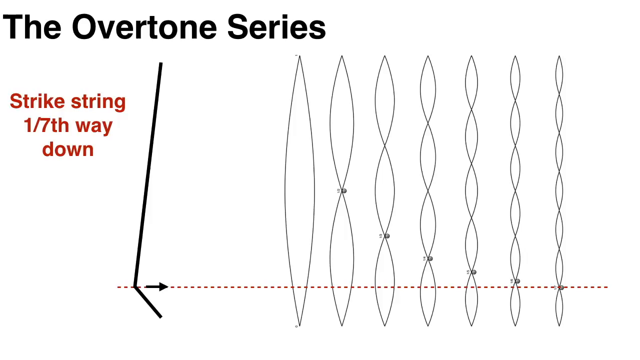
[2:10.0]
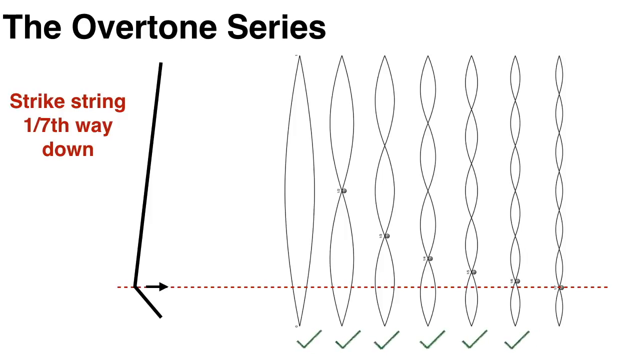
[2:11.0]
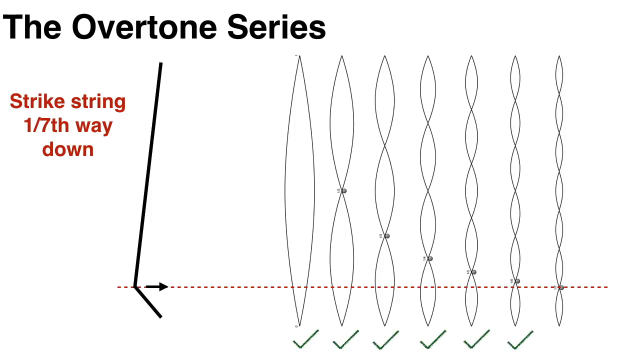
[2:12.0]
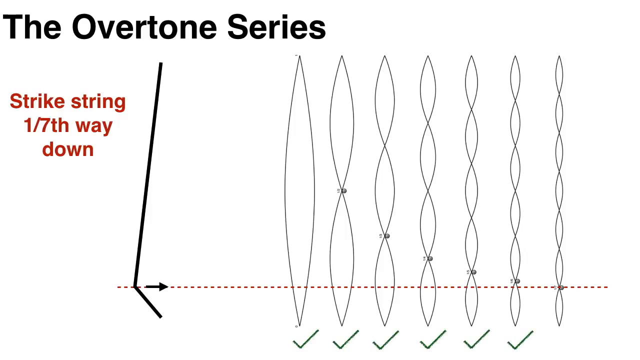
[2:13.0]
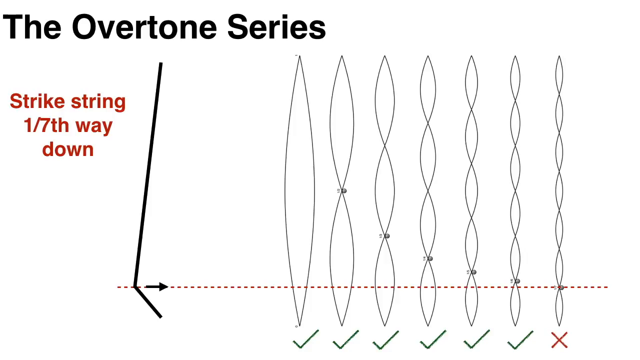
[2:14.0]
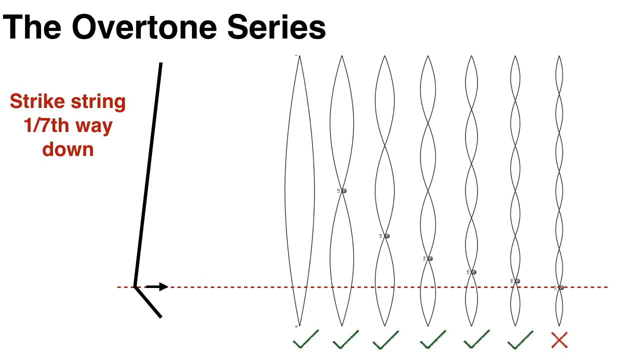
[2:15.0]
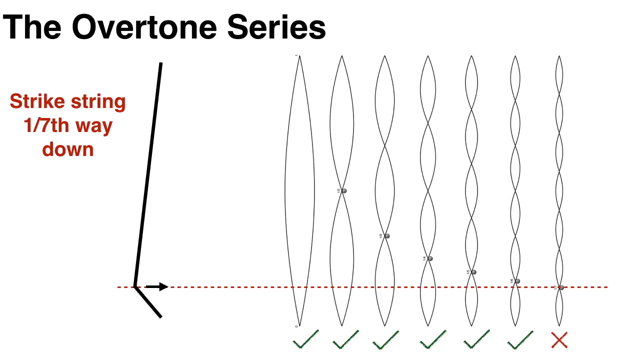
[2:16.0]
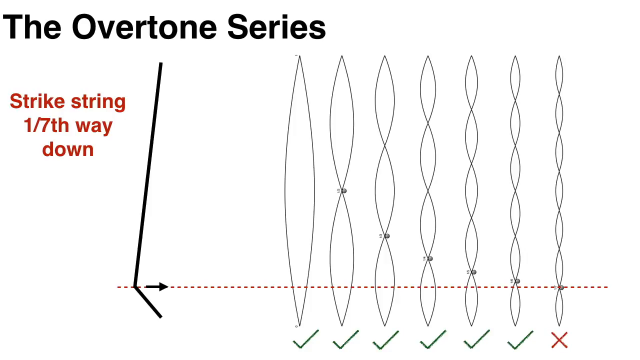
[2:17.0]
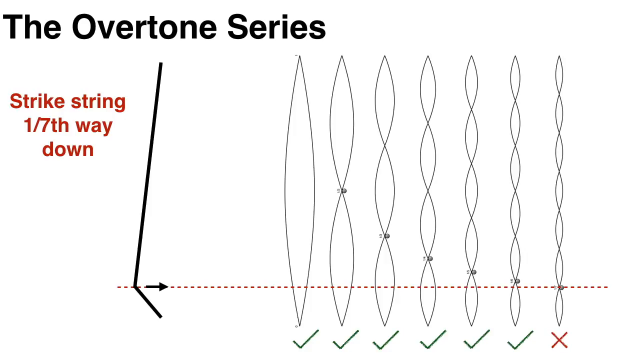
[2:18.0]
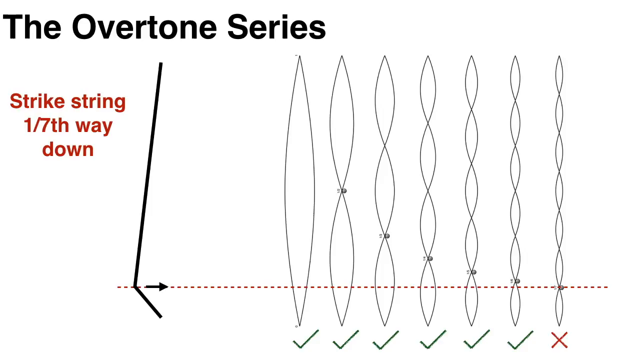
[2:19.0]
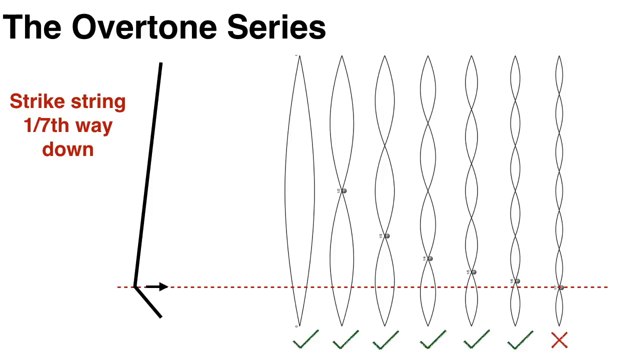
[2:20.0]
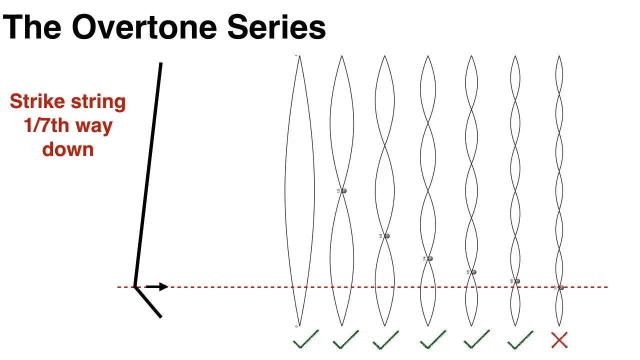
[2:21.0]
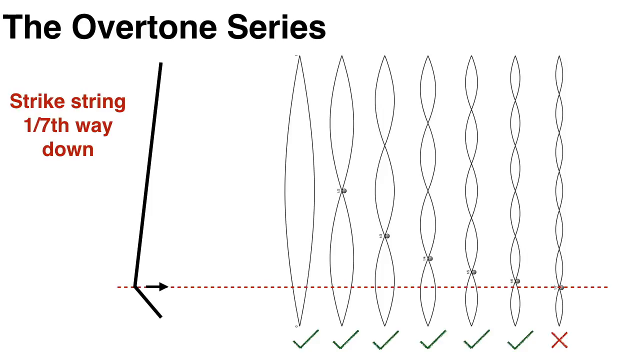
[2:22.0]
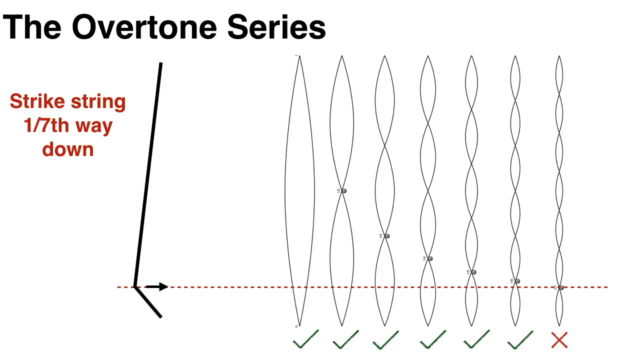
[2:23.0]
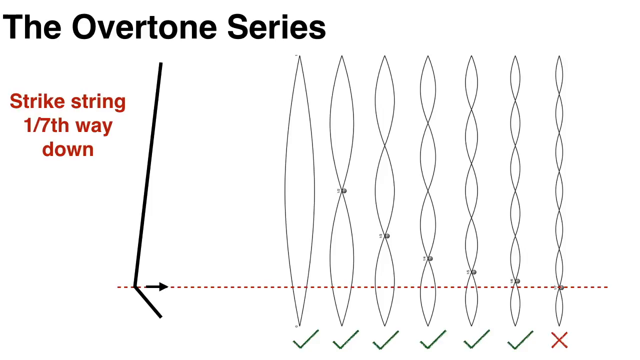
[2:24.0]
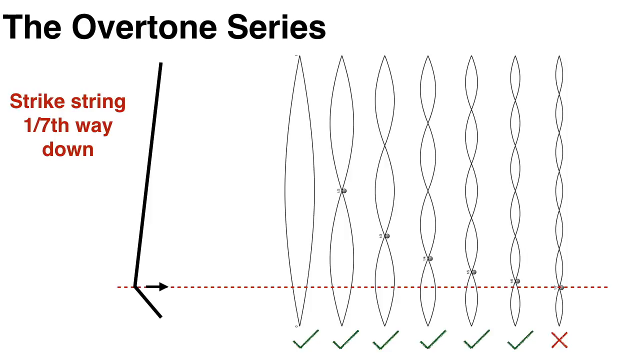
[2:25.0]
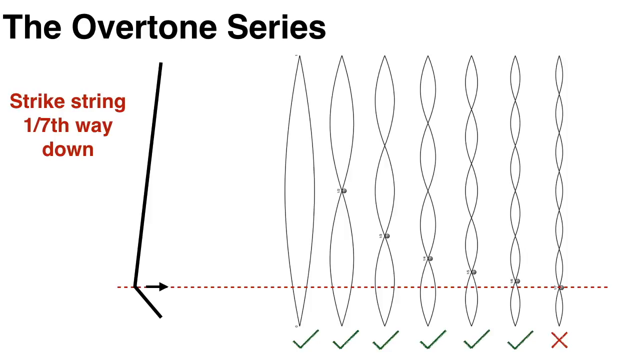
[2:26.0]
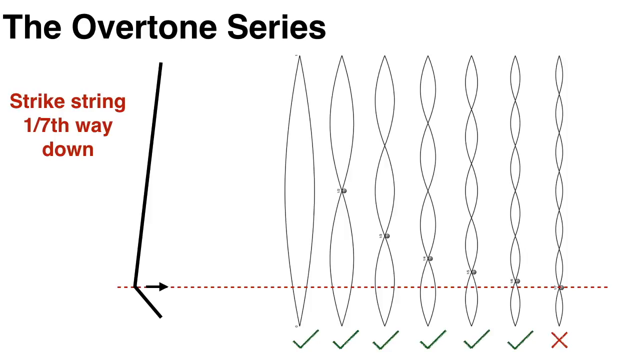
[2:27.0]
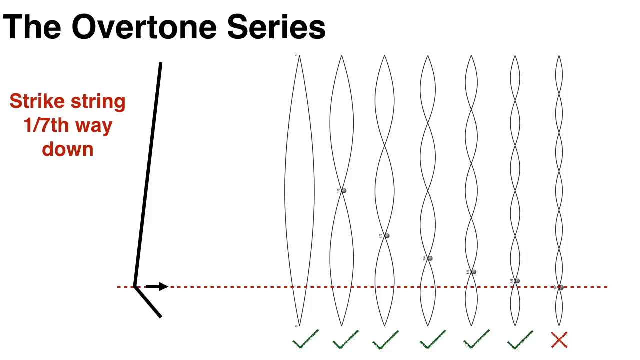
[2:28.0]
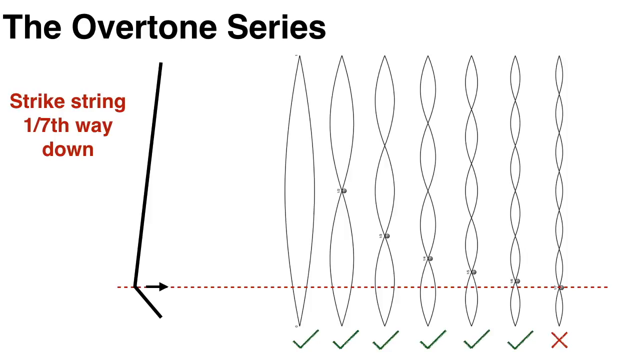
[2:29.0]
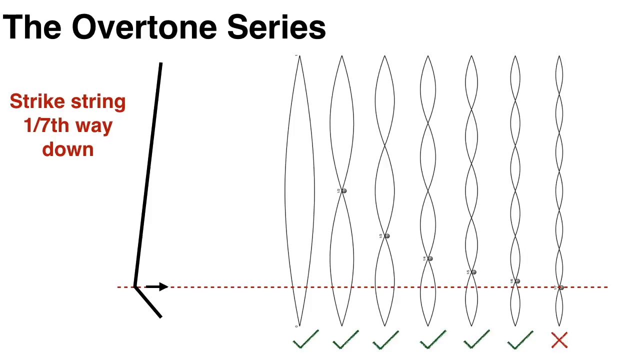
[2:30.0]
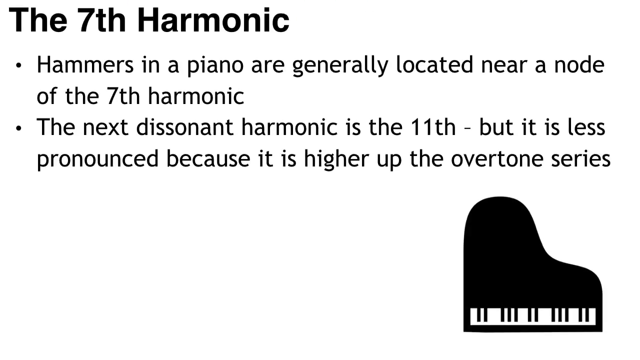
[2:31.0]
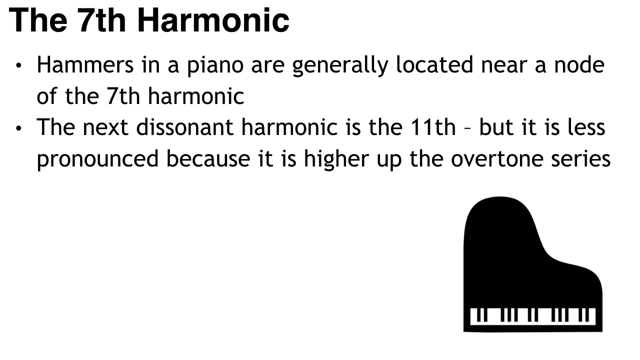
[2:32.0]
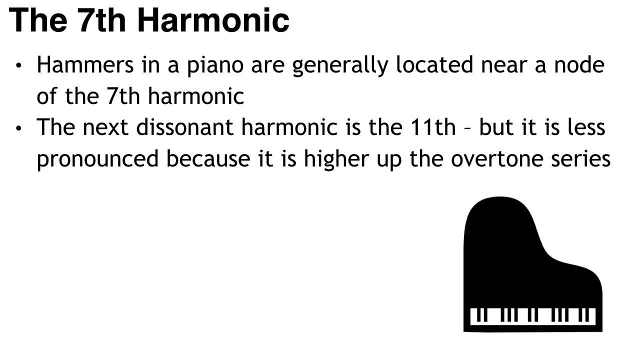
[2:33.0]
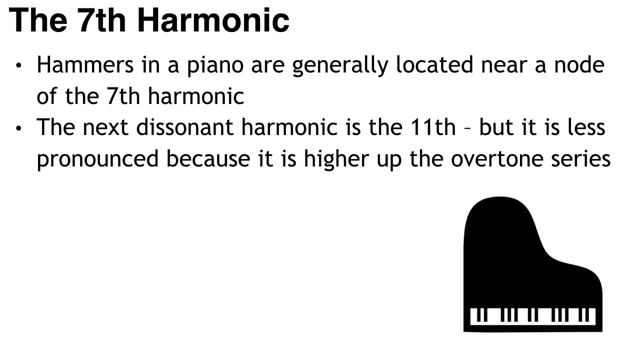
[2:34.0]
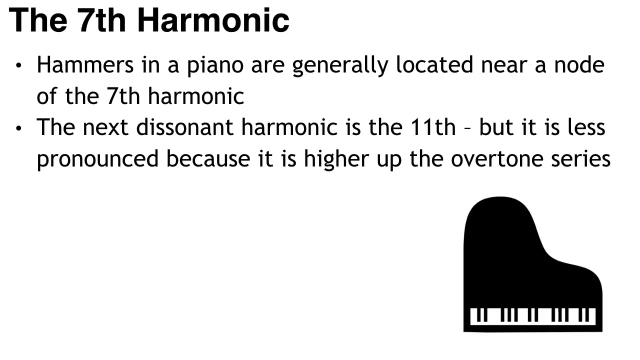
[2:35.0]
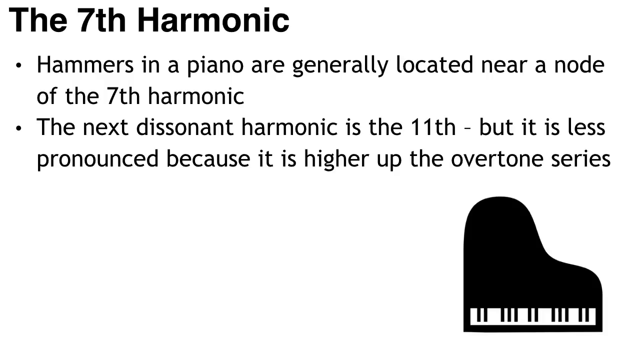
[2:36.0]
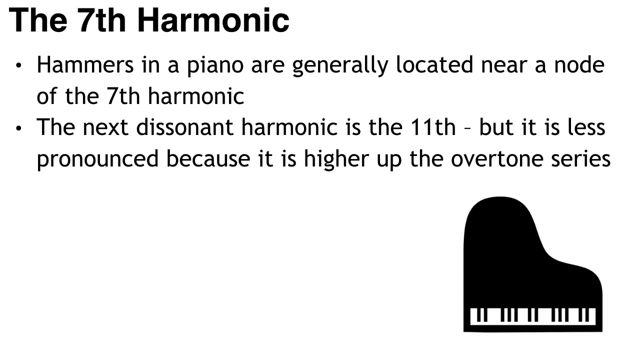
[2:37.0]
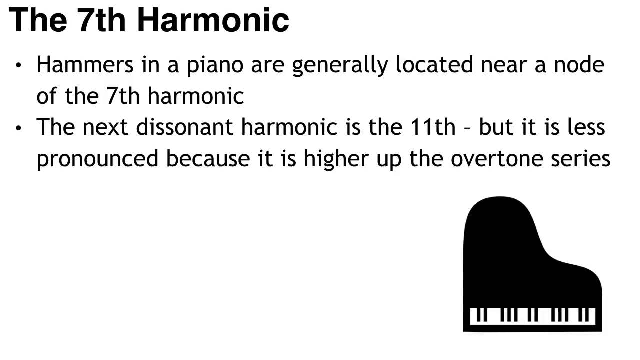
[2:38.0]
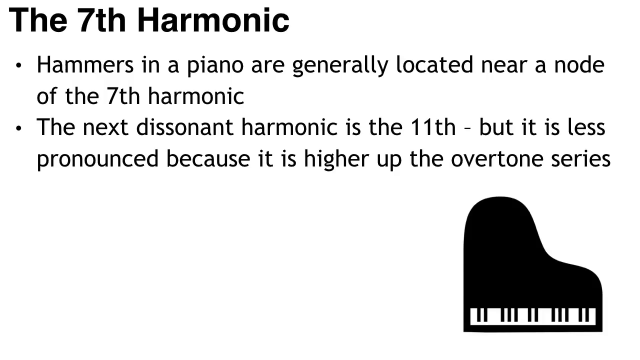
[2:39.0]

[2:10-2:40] A graphic about the overtone series shows what happens when a string is plucked at various distances. On the left, red text reads "strike string 1 7th of the way down," and just to the right is a string that looks like it is being struck there. A dotted line runs all the way to the right, where the waves get smaller, from halves to thirds, fourths, fifths, down to what appears to be sevenths. The graphic slides down and out of the way, and a new screen titled "the 7th harmonic" appears with two bullets: "hammers in a piano are generally located near a node of the 7th harmonic" and "the next dissonant harmonic is the 11th, but it is less pronounced because it is higher up the overtone series." In the lower right corner is a graphic of a grand piano.